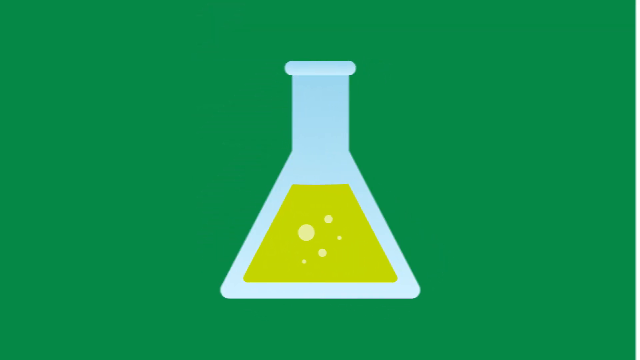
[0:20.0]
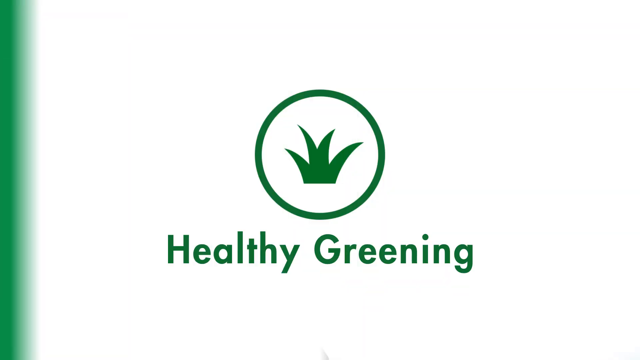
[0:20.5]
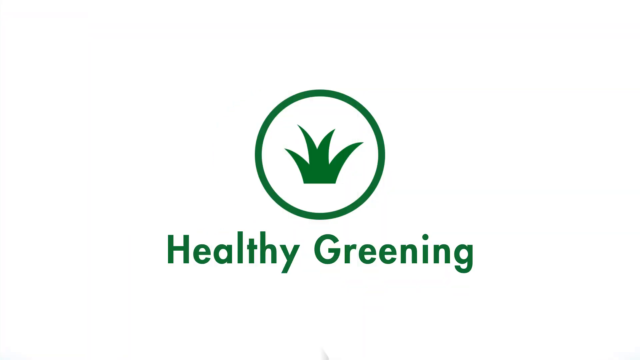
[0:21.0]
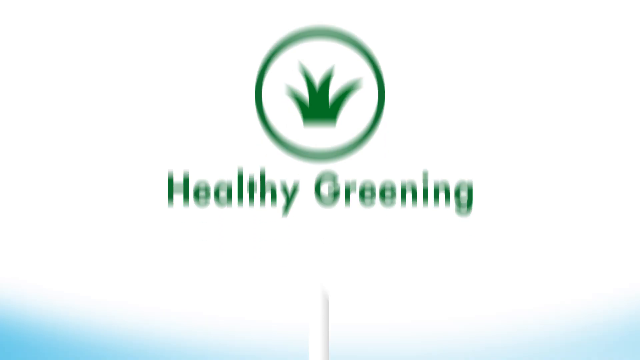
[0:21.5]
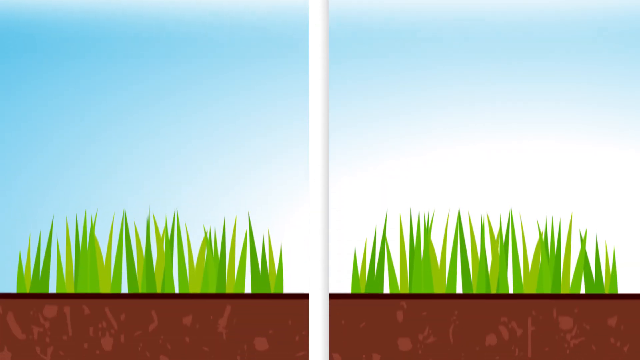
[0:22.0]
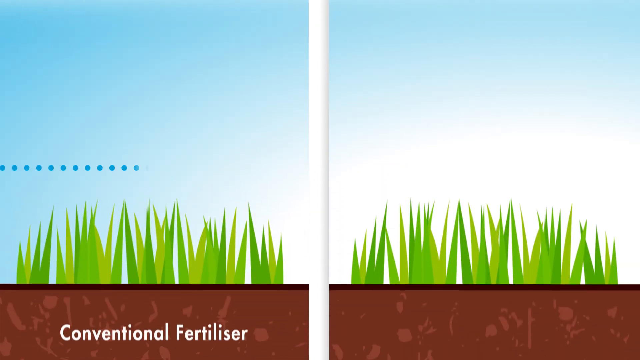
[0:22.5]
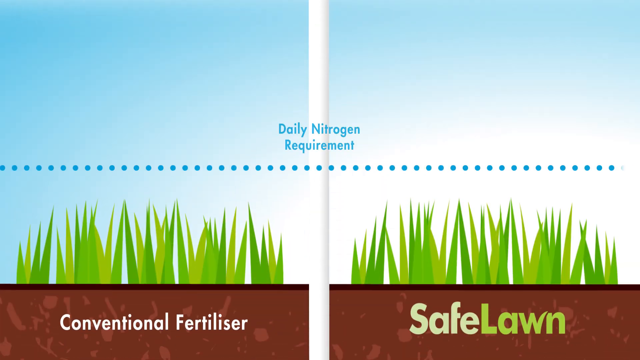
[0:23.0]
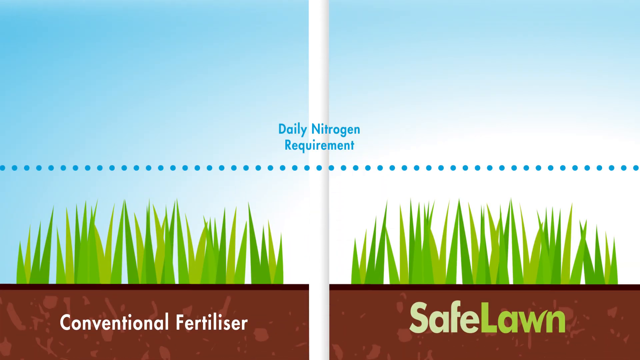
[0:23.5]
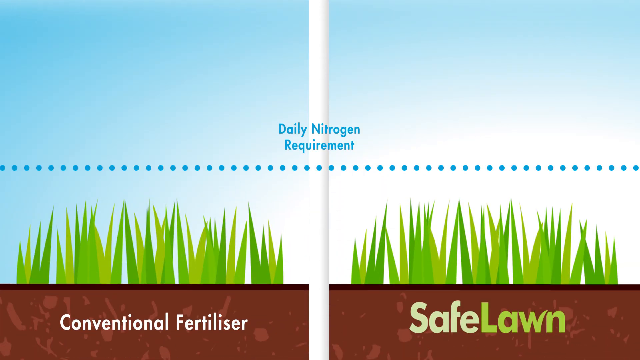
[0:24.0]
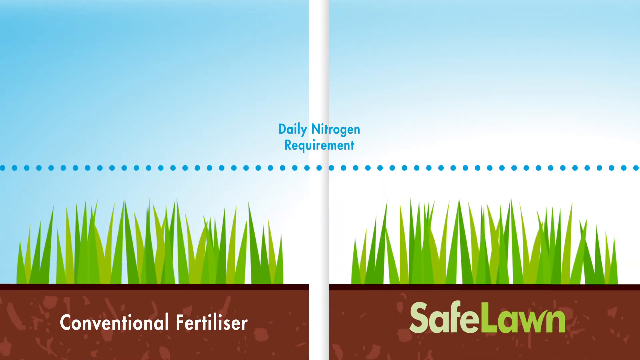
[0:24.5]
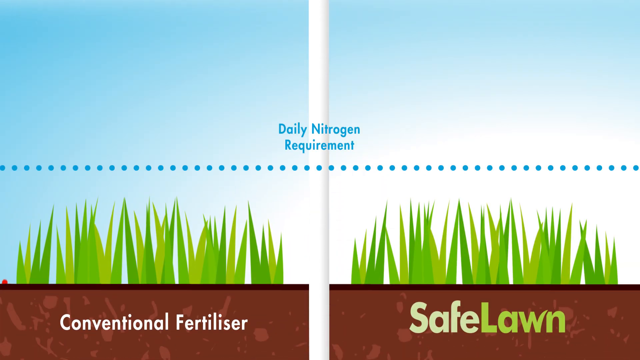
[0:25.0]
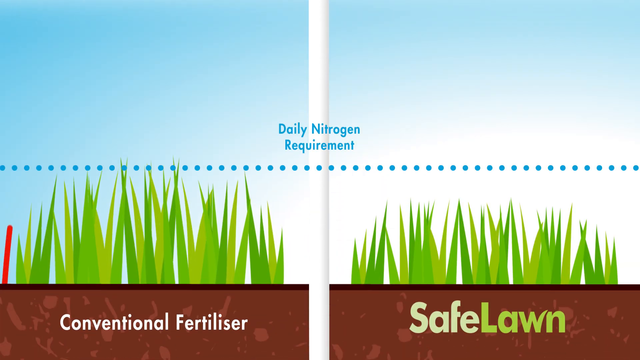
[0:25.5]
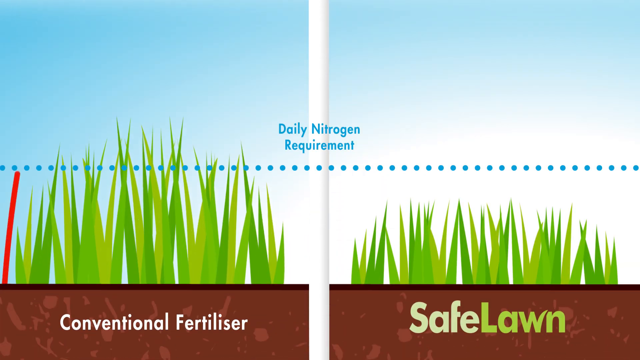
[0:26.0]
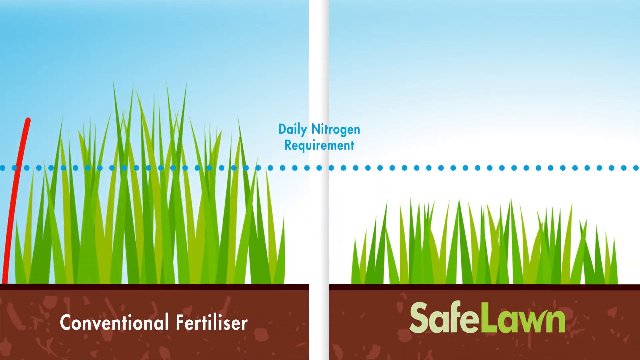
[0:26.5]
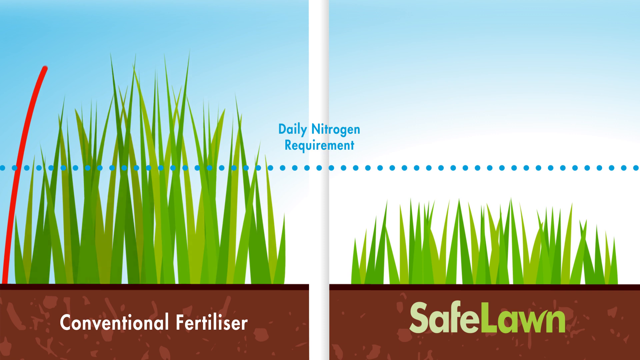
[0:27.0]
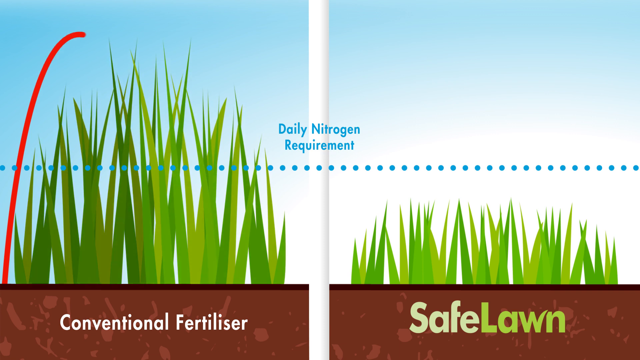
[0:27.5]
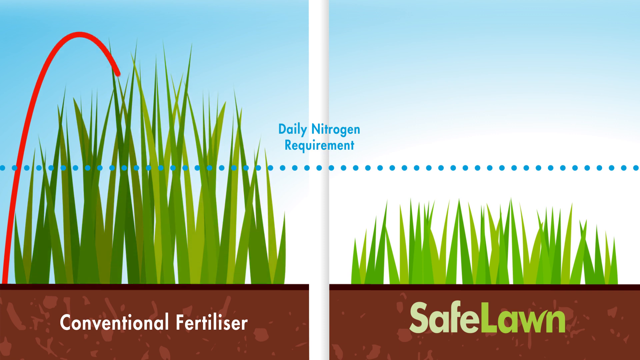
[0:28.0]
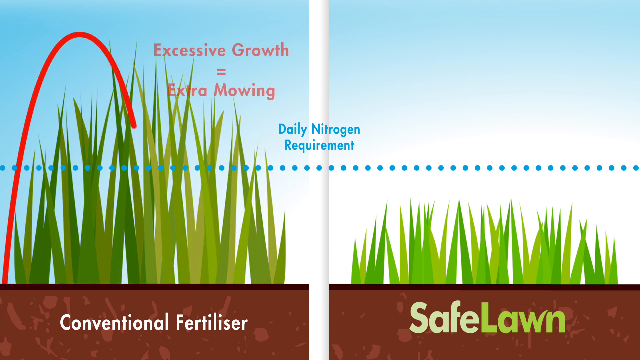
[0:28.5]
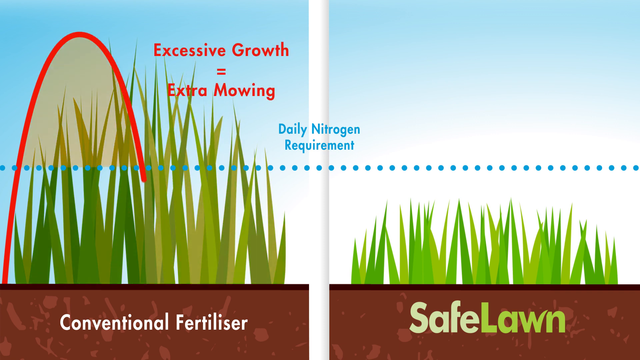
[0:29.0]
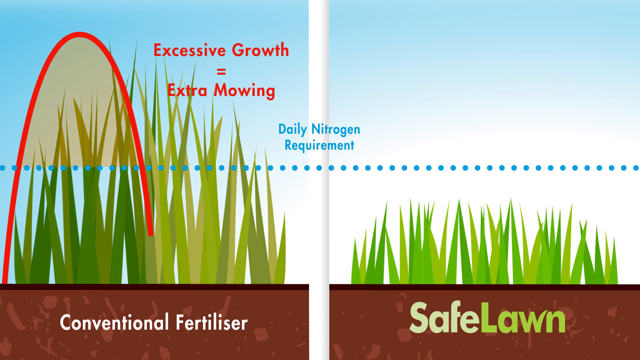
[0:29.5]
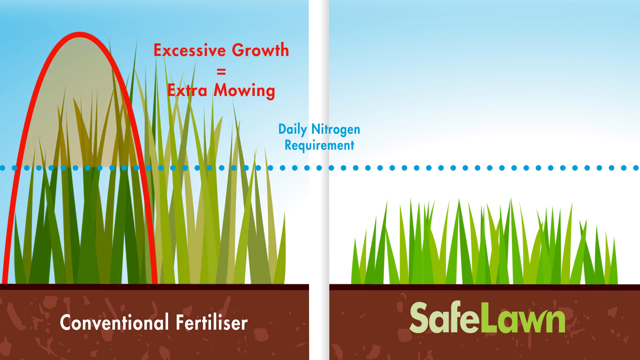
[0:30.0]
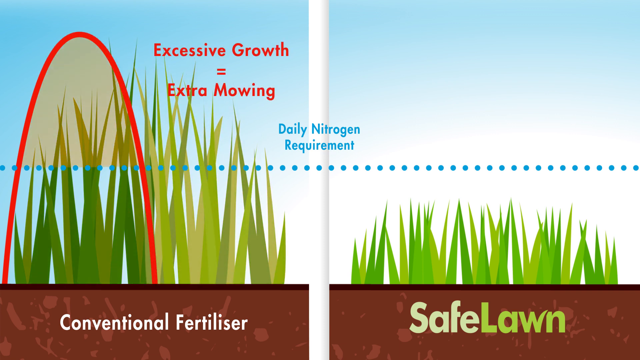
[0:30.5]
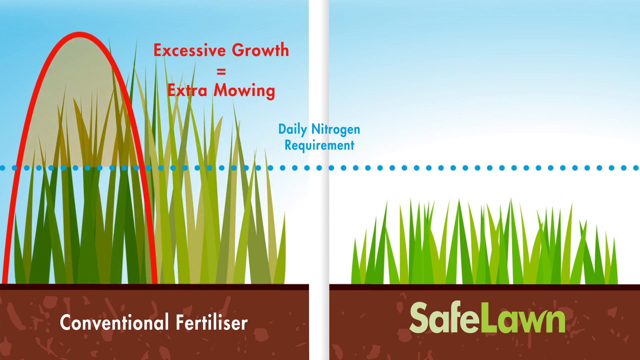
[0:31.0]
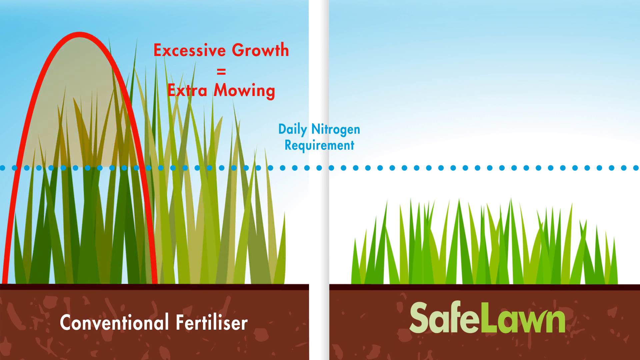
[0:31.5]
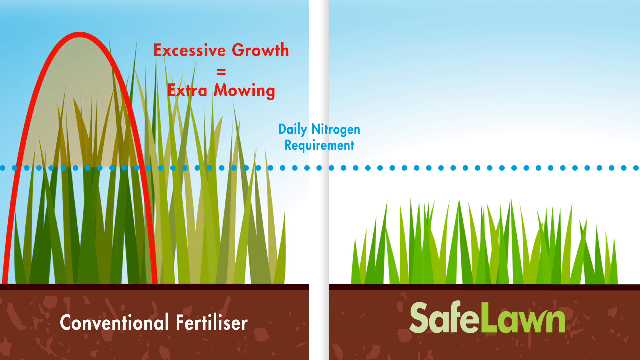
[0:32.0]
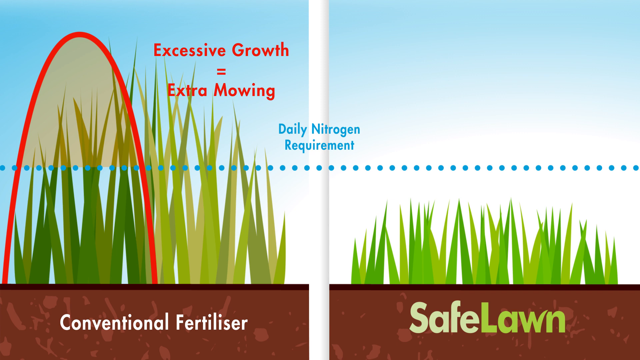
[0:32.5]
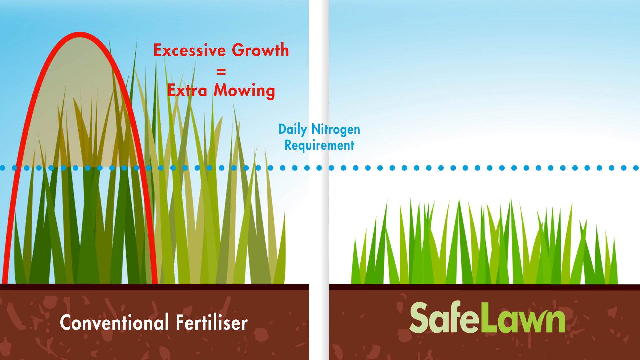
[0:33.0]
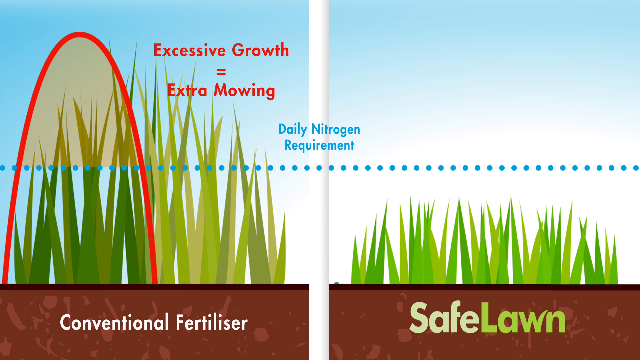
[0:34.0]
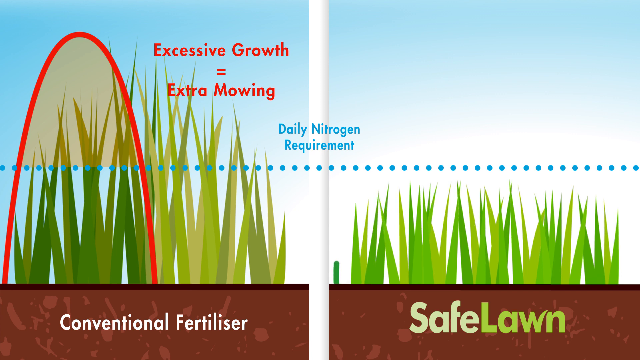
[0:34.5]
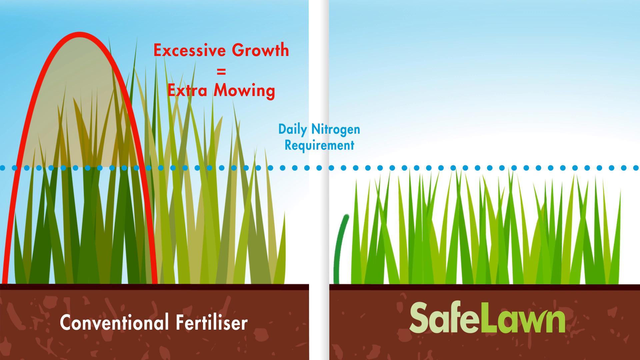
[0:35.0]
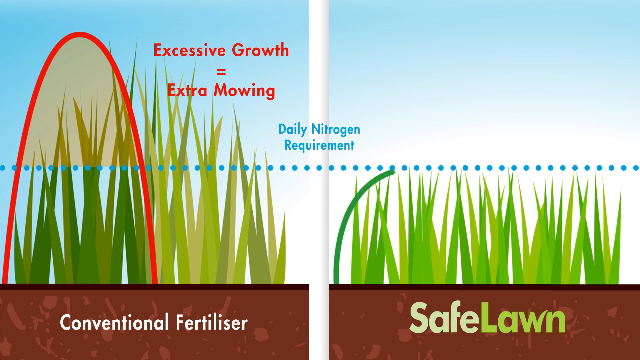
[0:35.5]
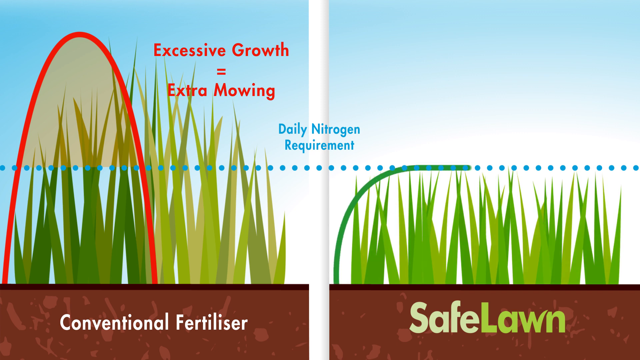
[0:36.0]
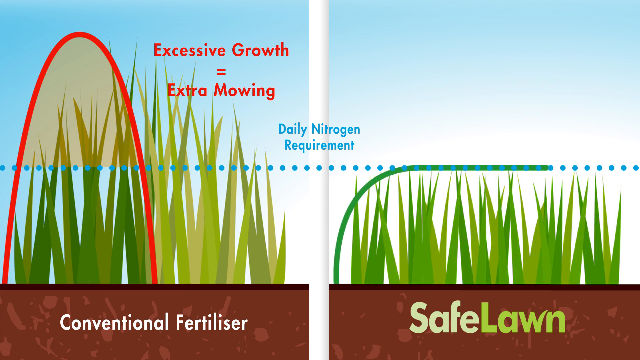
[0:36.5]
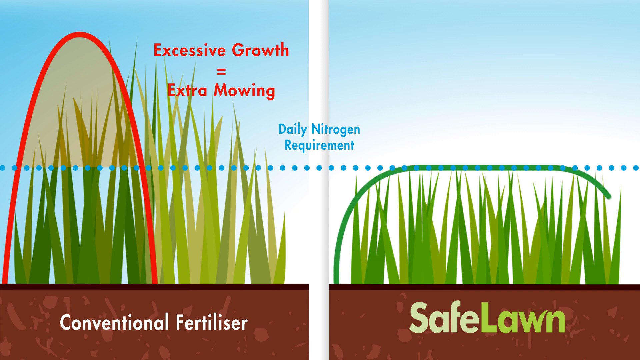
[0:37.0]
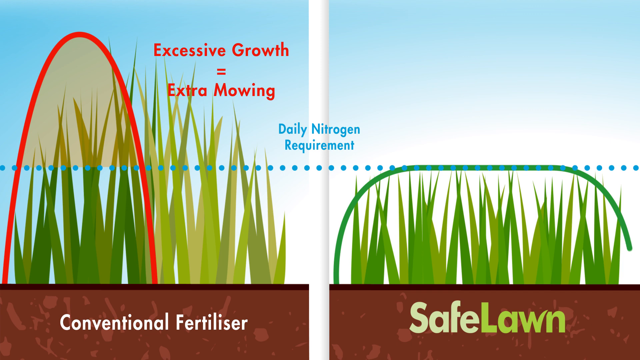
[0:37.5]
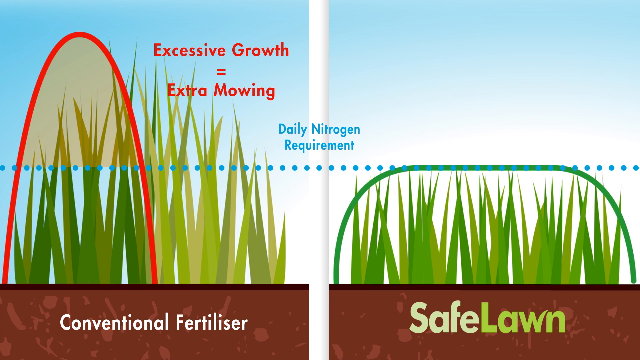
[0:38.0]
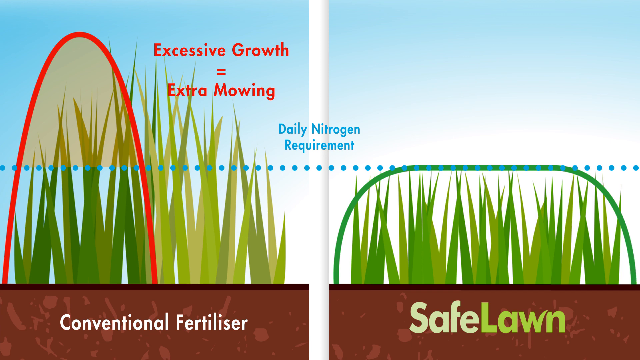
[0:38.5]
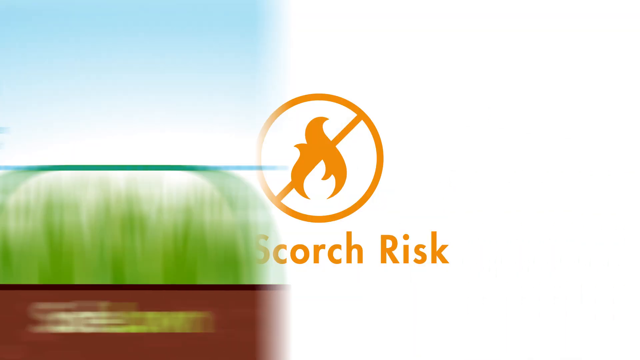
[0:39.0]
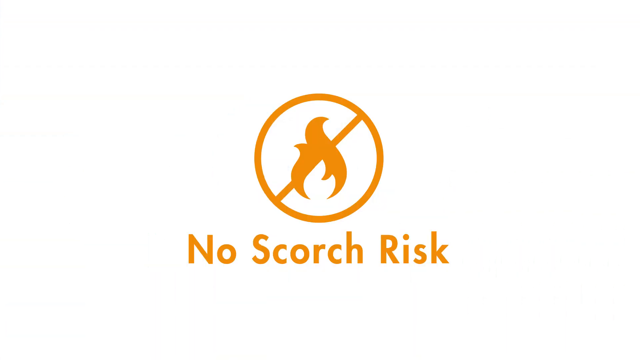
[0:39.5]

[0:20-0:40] The video says "healthy greening." A table compares lawn growth when conventional fertilizer is applied with lawn growth when safe lawn is used. With conventional fertilizer there is very excessive growth on the lawn, which causes extra mowing. With safe lawn, the daily nitrogen requirement is reasonable, the growth of the lawn is reasonable, and there is no extra mowing. The lawn on the safe lawn side looks noticeably healthier and greener.